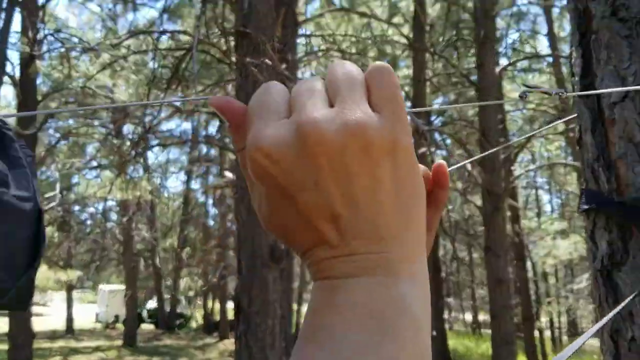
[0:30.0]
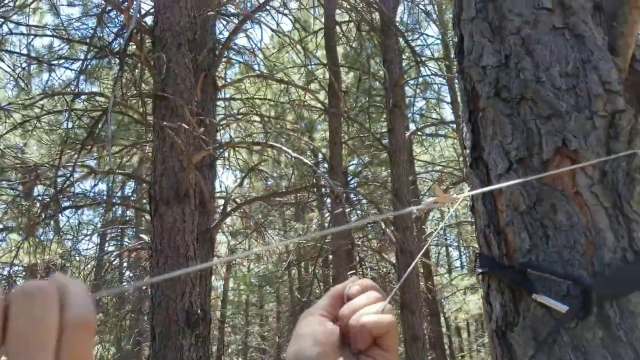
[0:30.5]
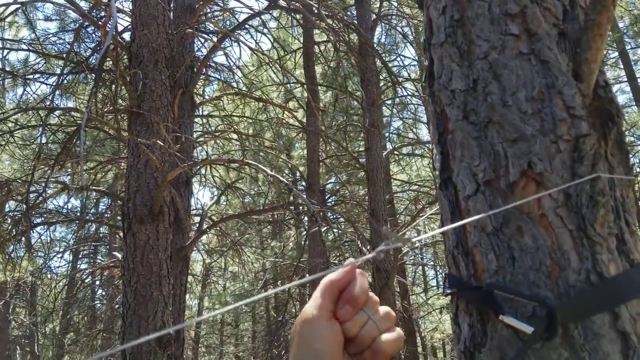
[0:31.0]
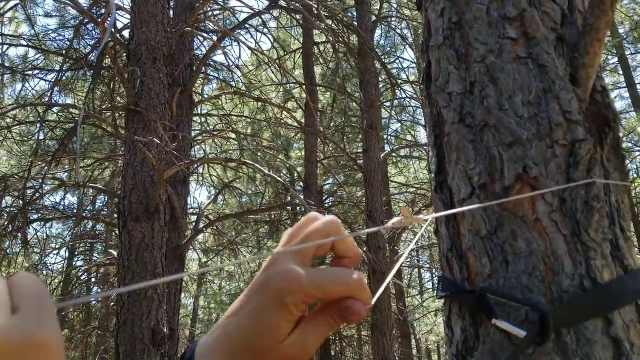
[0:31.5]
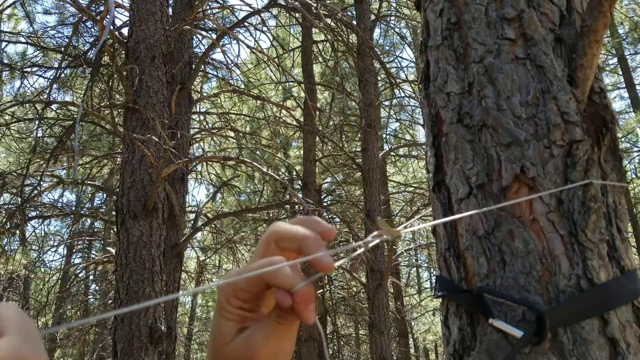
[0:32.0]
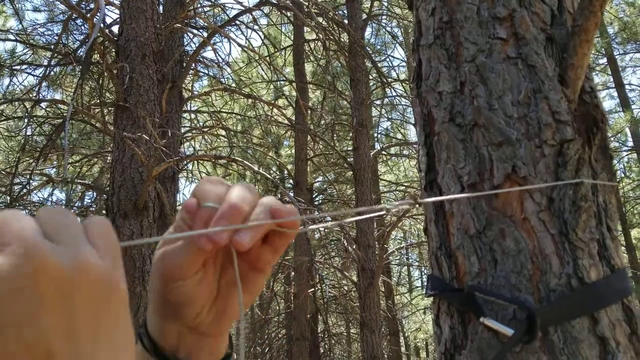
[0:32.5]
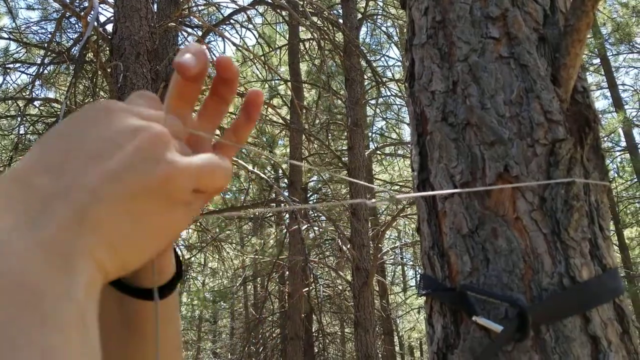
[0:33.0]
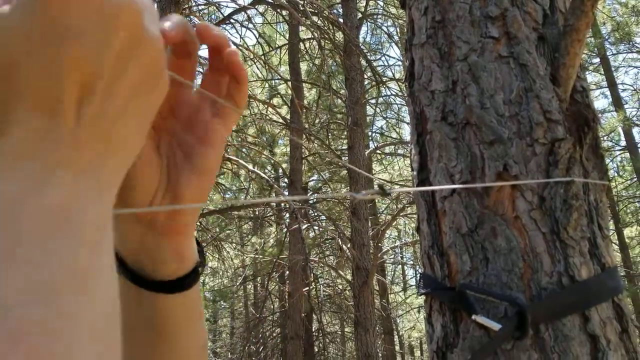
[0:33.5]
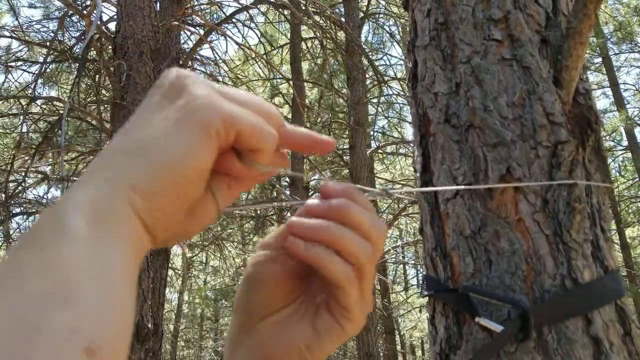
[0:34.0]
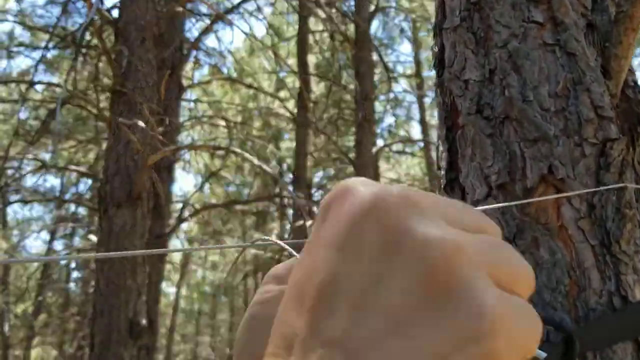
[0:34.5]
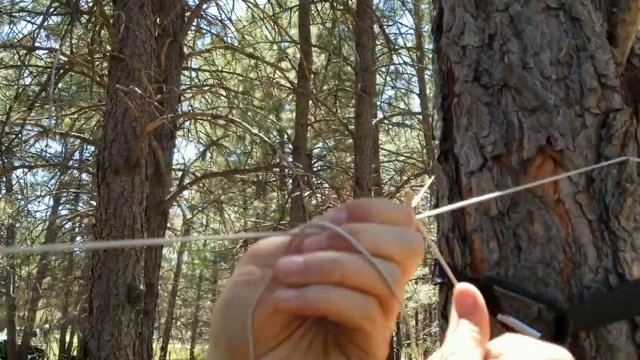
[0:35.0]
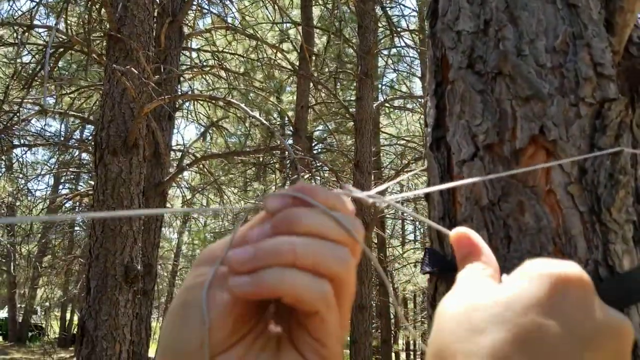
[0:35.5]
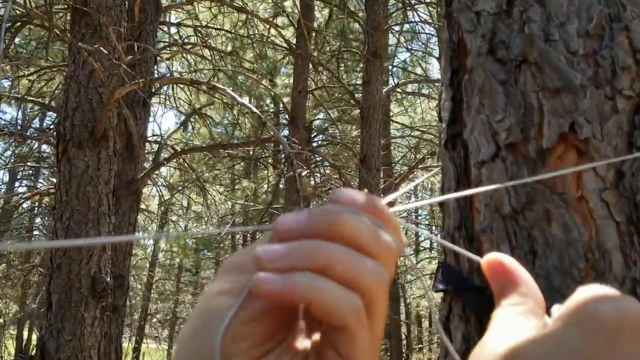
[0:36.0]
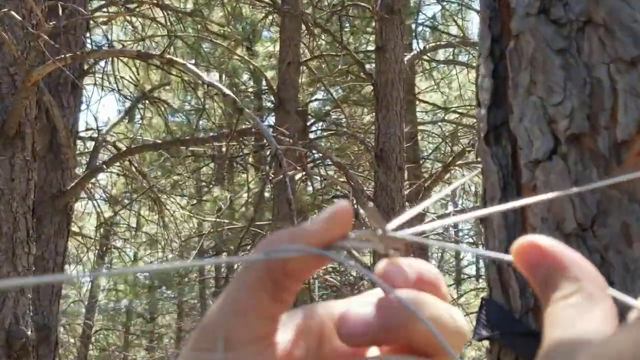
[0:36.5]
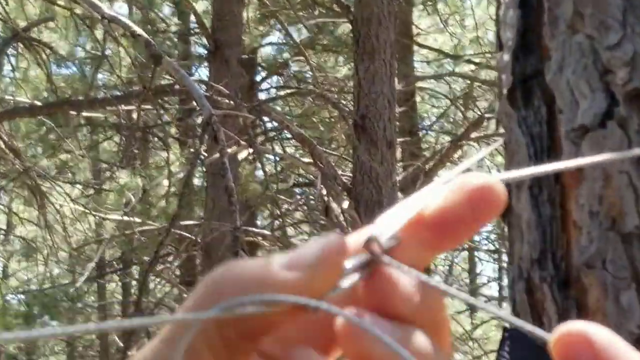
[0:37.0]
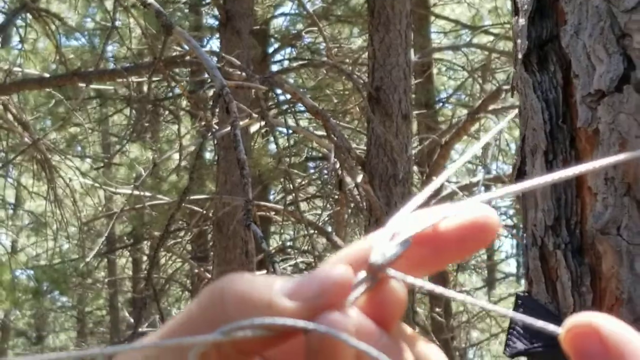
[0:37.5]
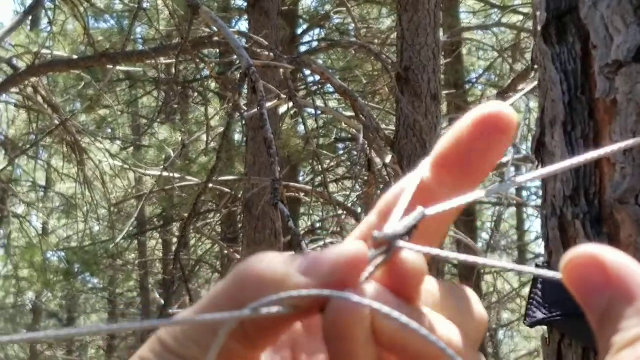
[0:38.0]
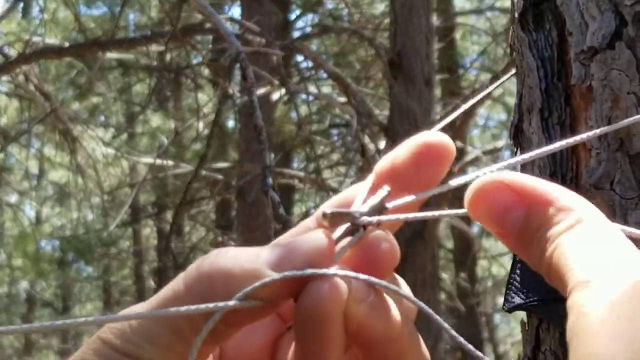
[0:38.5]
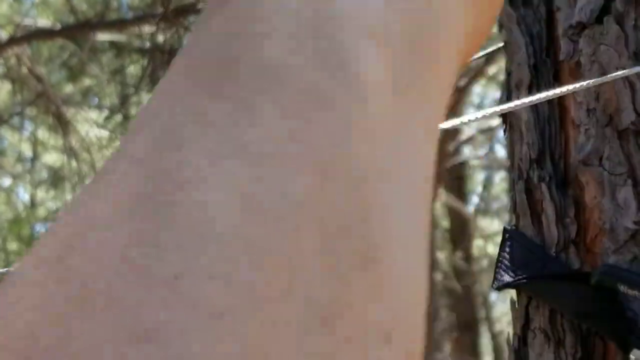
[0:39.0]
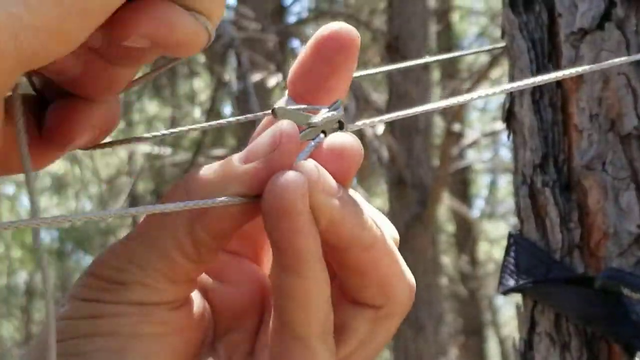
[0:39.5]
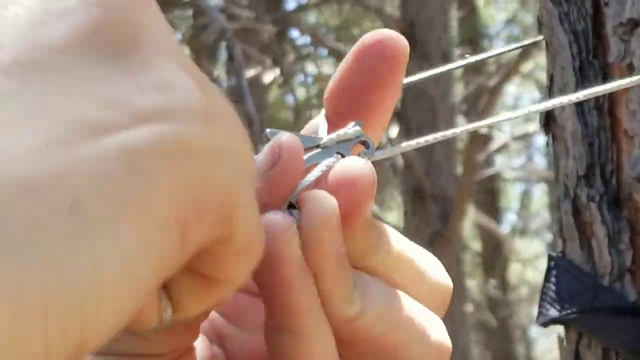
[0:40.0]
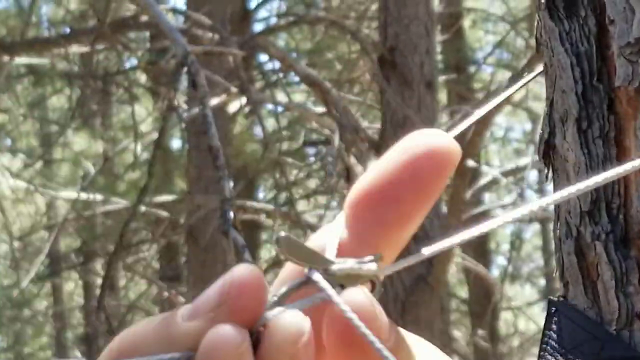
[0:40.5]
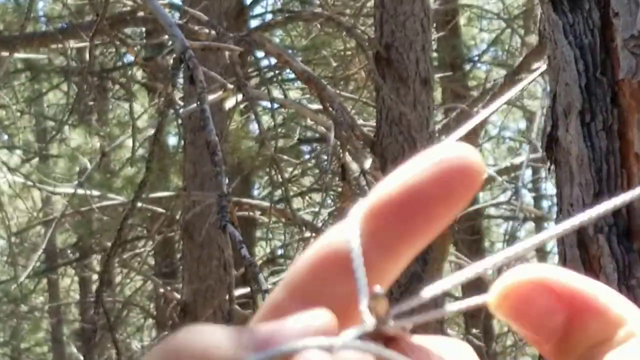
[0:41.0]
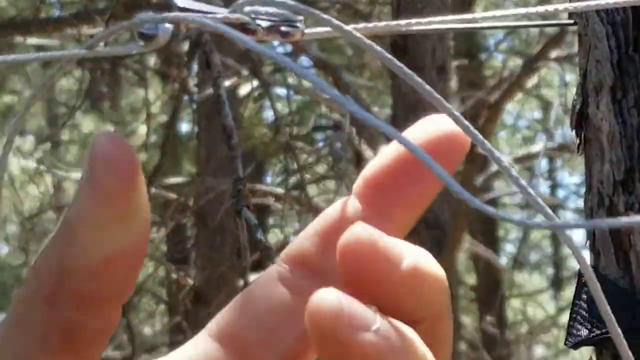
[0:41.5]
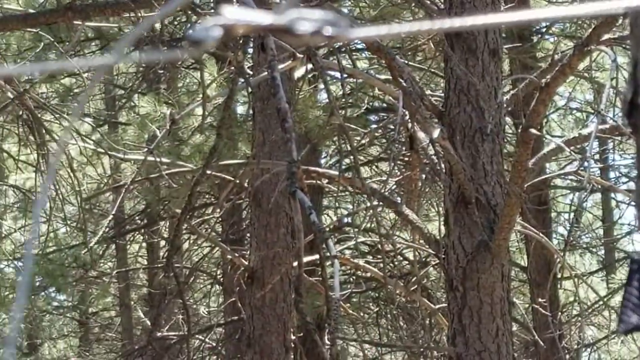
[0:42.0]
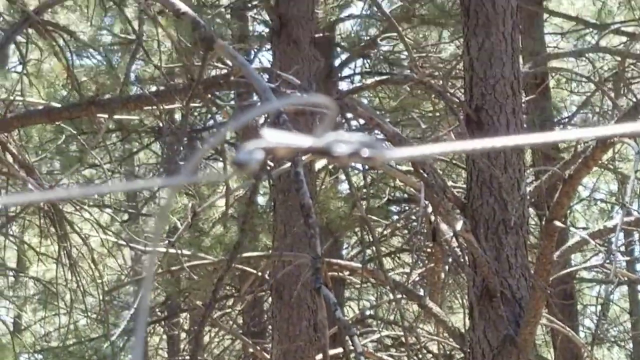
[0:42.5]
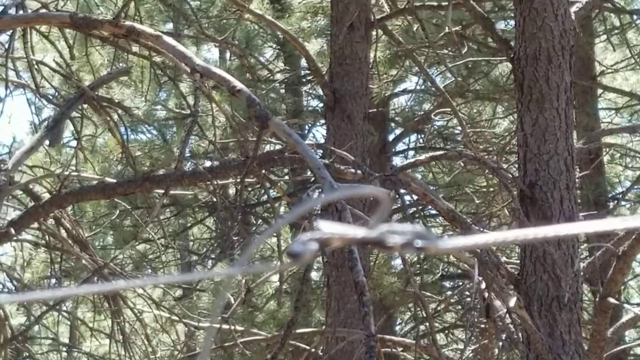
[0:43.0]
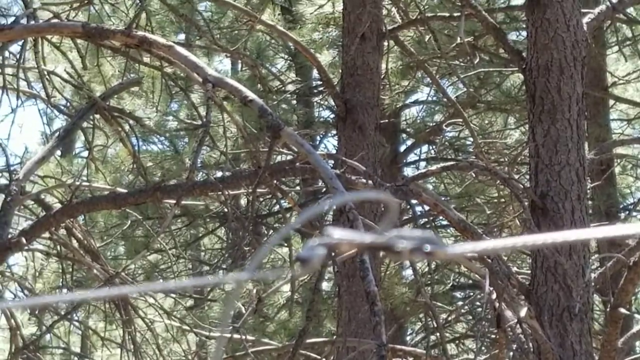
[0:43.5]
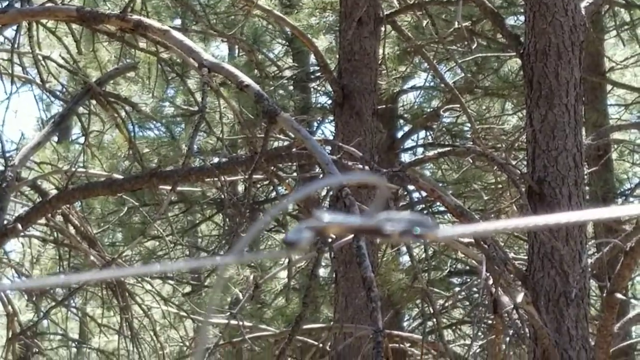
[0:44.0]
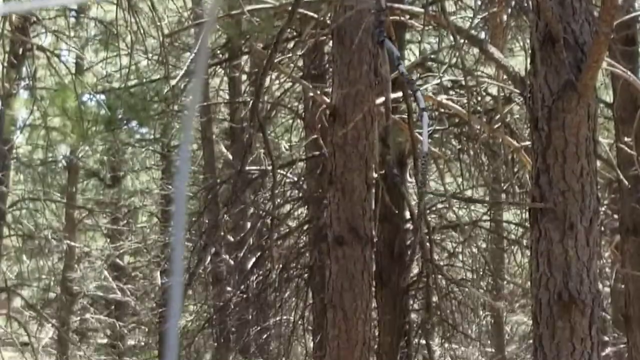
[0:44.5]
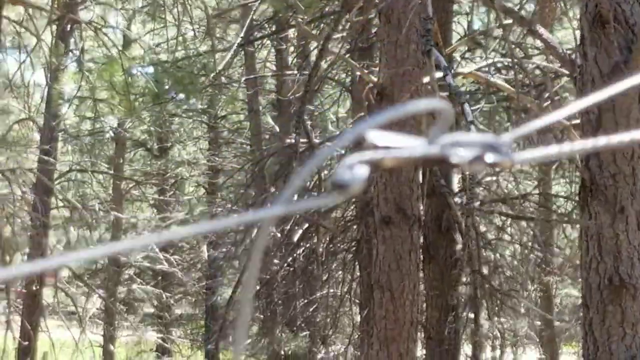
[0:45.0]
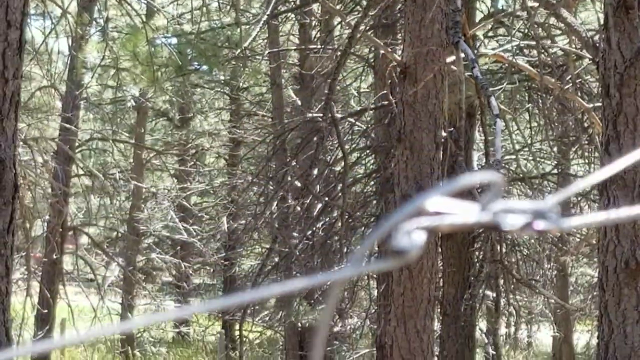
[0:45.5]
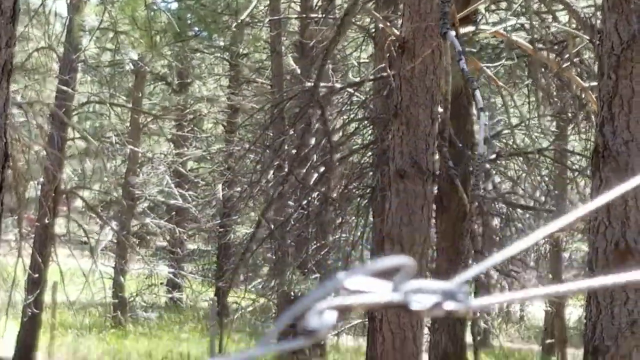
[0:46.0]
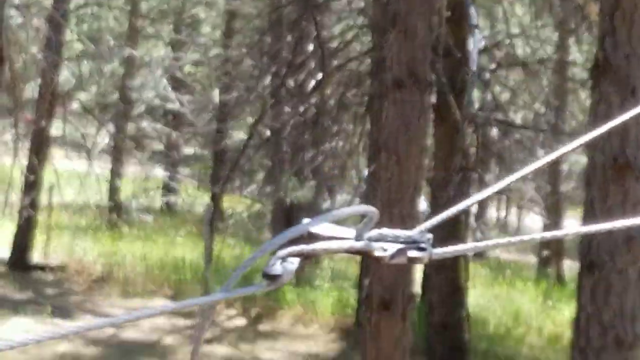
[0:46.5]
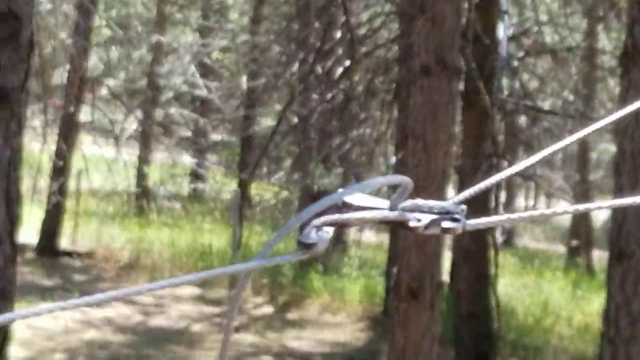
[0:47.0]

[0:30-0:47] The person doubles the string tied to the tree over itself. There appears to be some sort of clasp or anchor device on it, seemingly some sort of metal structure that they attach the doubled-over string or cable to, apparently to tie it tightly so it stays in place. Their hands are visible doing this, and occasionally the person can be seen; they appear to be wearing a black wristband, and the person appears to be a woman, though really only their face can be made out. In the wooded area, the string is tied over itself and secured, possibly with the clasp or anchor device, so it is looped around the tree and secured.